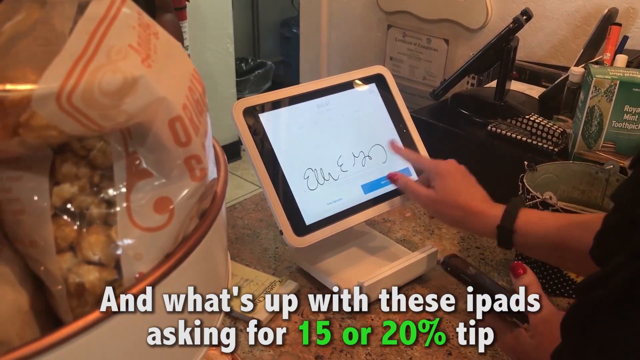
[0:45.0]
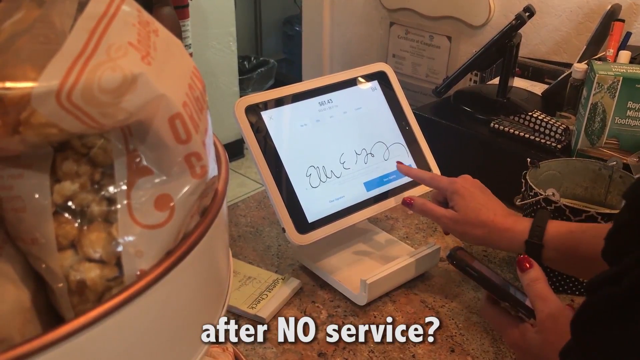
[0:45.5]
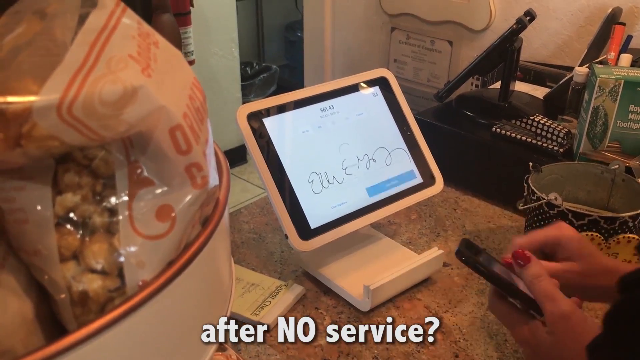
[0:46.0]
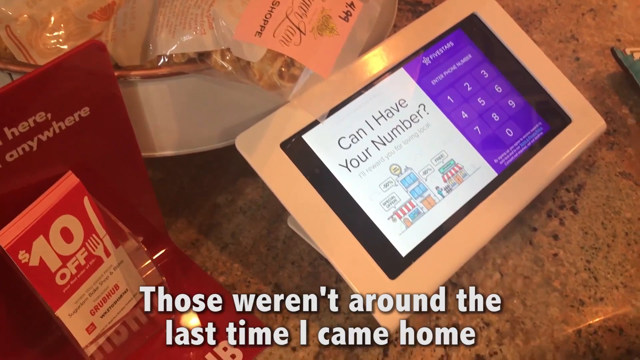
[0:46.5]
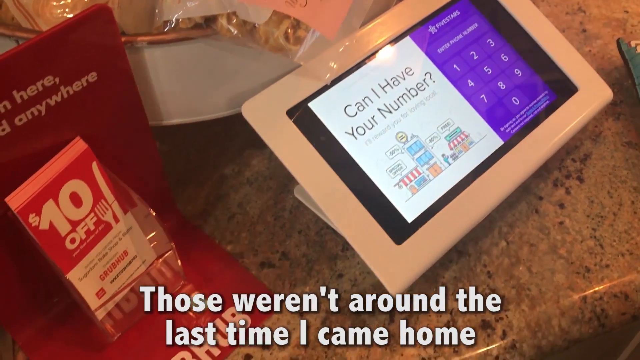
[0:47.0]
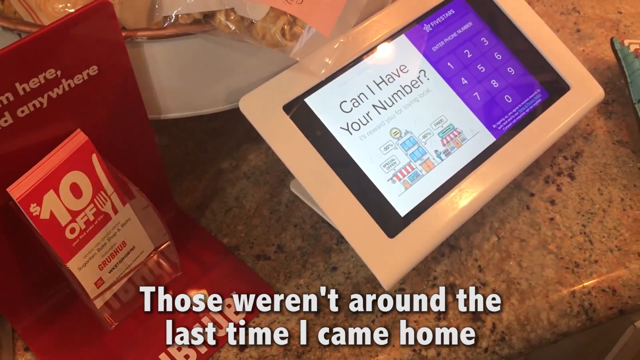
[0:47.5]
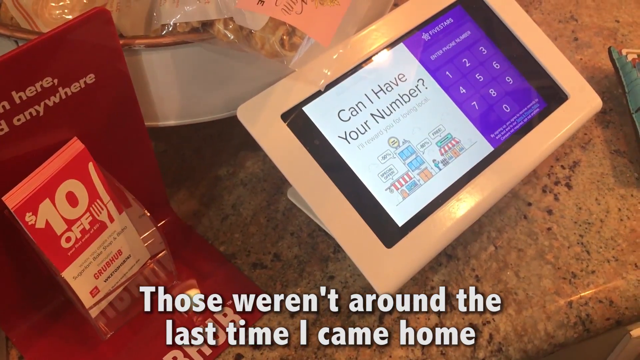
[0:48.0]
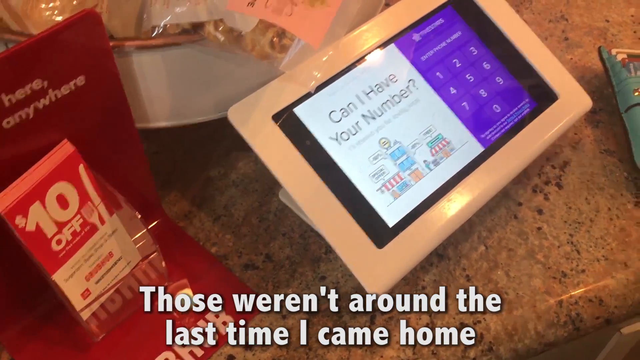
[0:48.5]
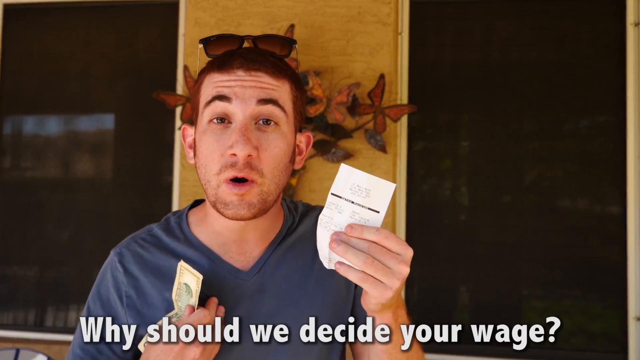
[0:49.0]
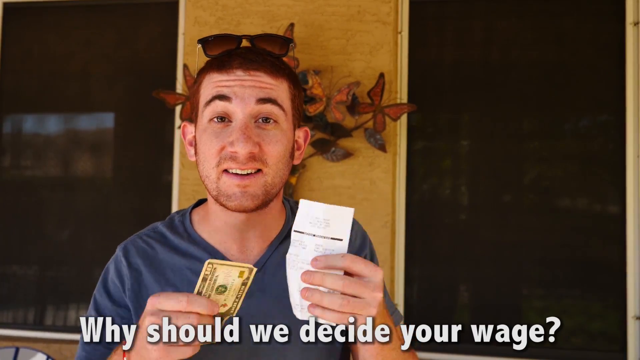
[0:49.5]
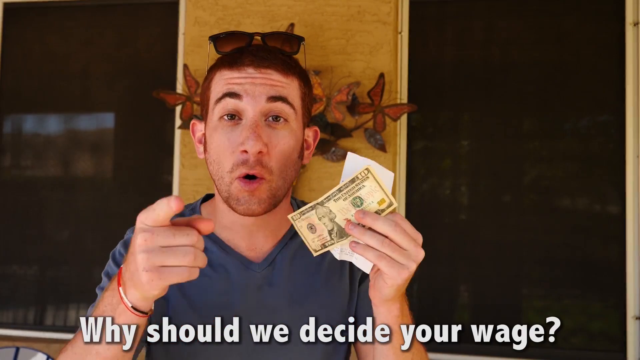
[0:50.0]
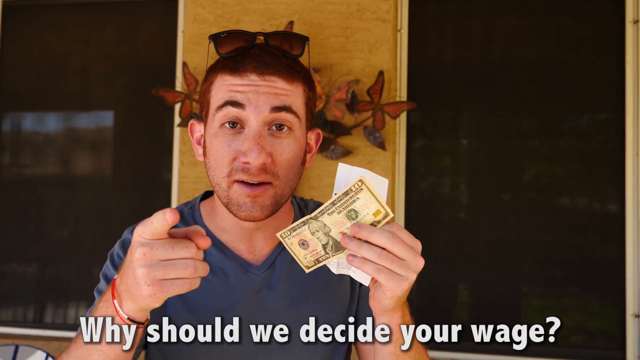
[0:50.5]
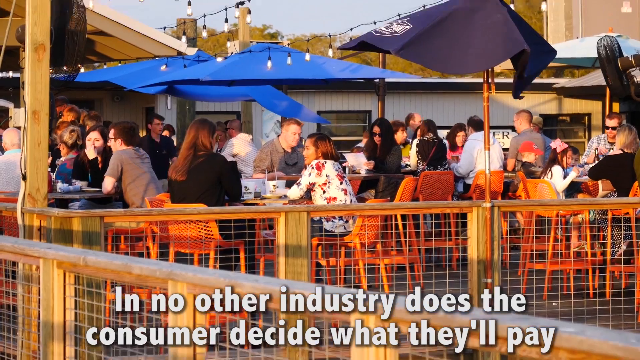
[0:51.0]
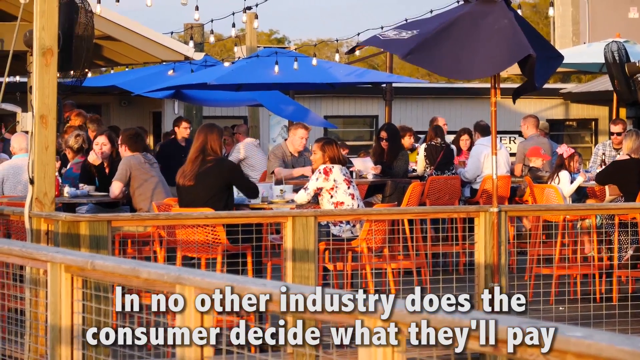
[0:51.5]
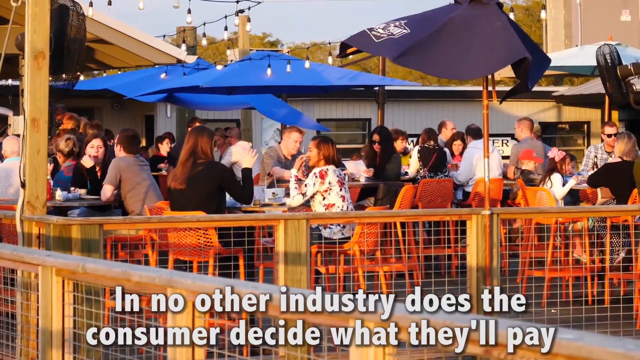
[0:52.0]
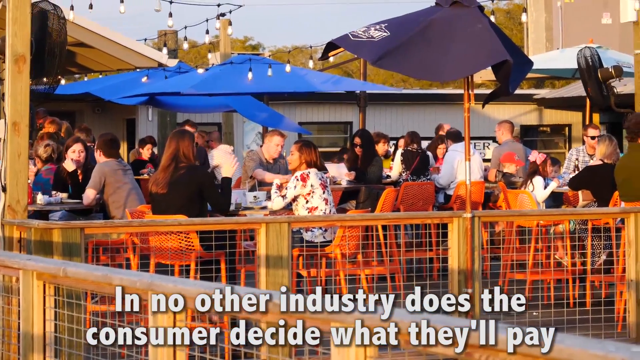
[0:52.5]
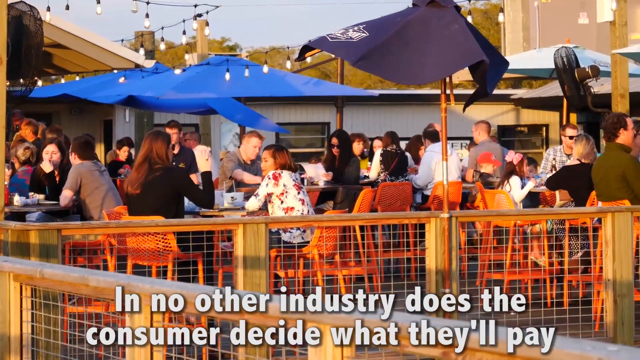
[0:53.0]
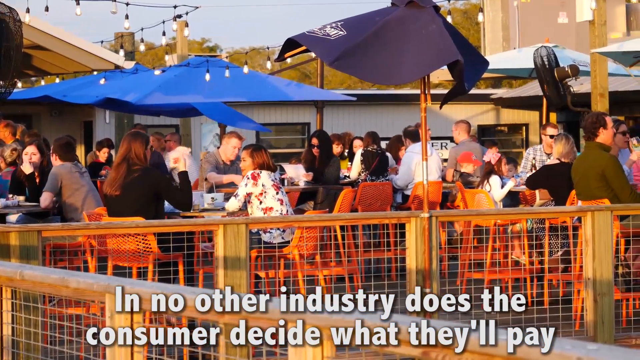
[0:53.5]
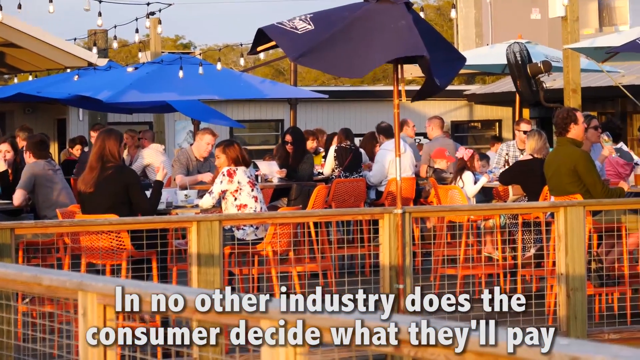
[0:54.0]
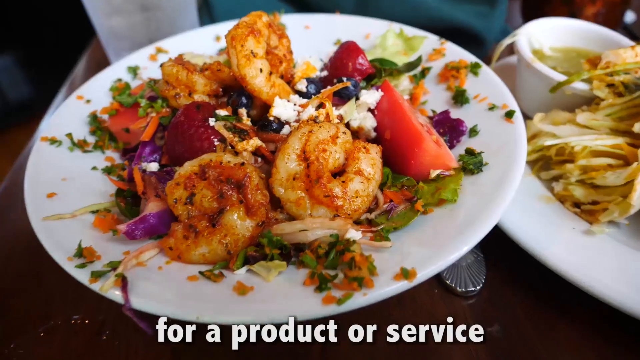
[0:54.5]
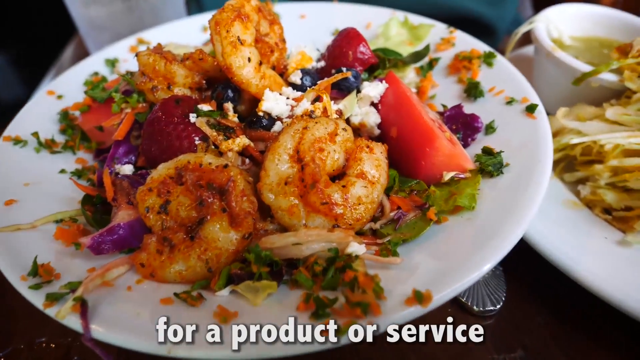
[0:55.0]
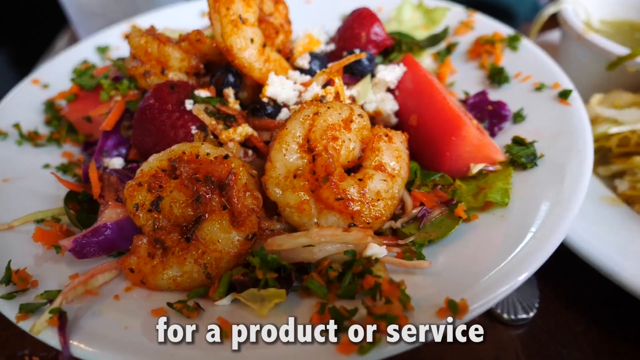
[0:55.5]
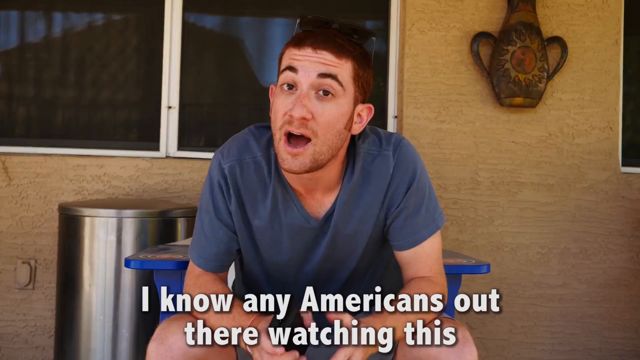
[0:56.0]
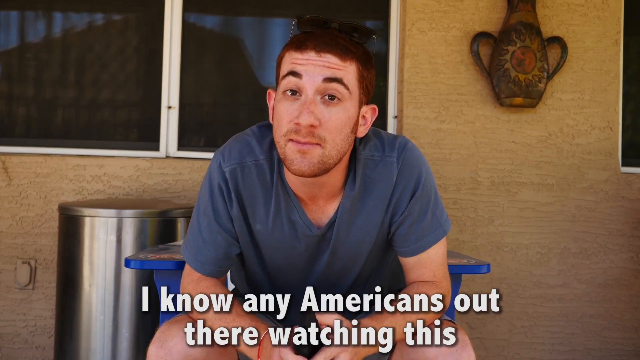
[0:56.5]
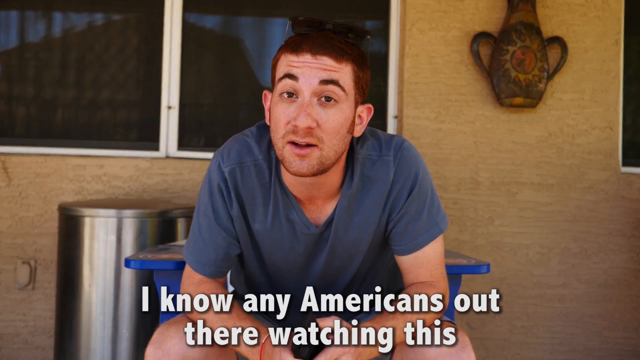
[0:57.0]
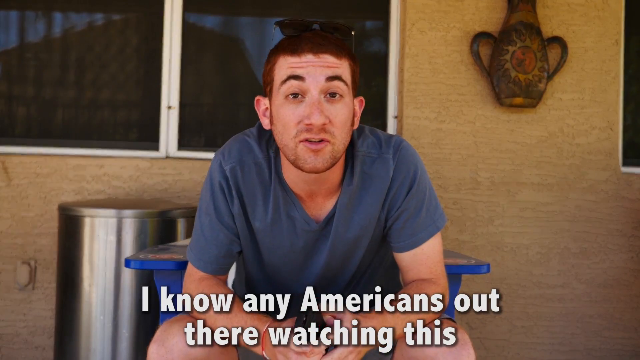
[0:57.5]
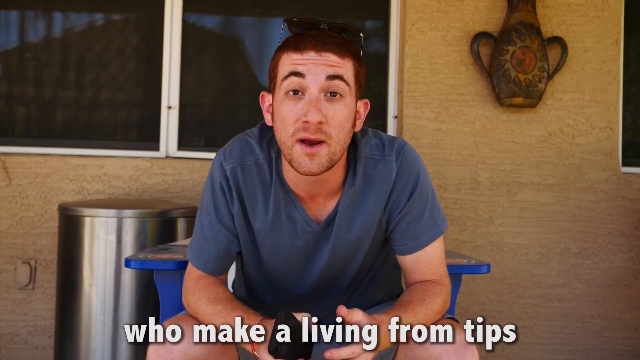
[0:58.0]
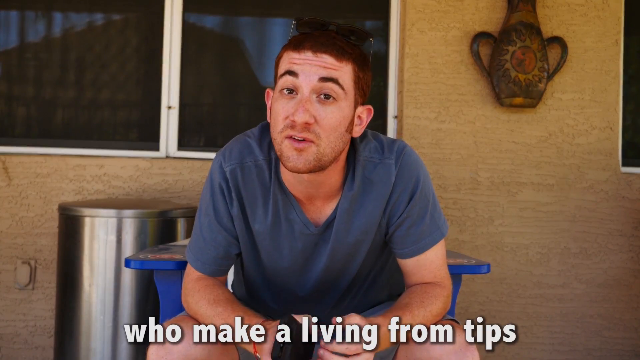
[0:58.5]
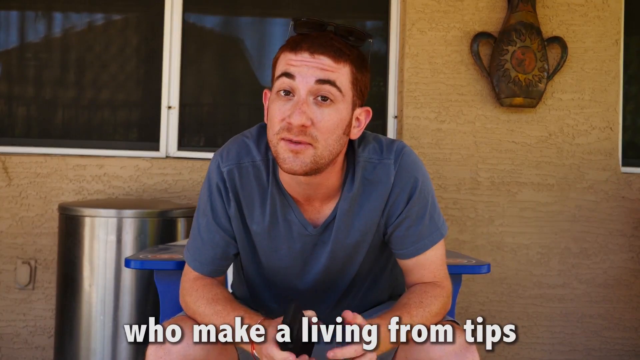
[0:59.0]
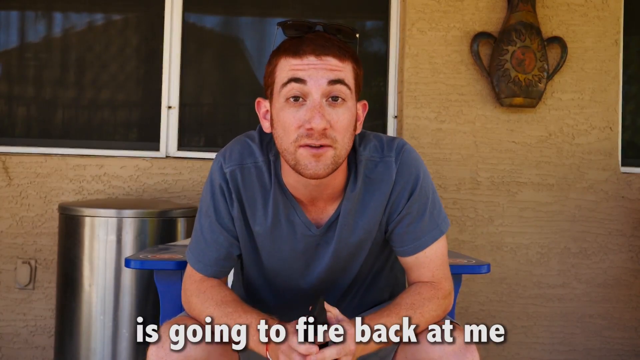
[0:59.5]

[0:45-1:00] The iPad-like object serving as the cash register is shown as the person signs their name and presses a blue submit button, apparently finalizing the signature. The view pans out to a similar, maybe the same, object in landscape orientation with a purple number pad on the screen for entering information. Then, zoomed out or in a different scene, the same man stands against a wall with his sunglasses on top of his head, holding up money and talking to the camera, seemingly discussing wages; he has a $10 bill and a receipt in his hand. Another scene shows an outdoor patio with a bunch of umbrellas, many of them blue, and orange-like patio tables and chairs, where numerous people sit eating and conversing. Next, a white plate has shrimp in the center surrounded by bright colors such as purples, greens, oranges and some reds, which might be some type of fruit or vegetable, likely food served at this patio place.